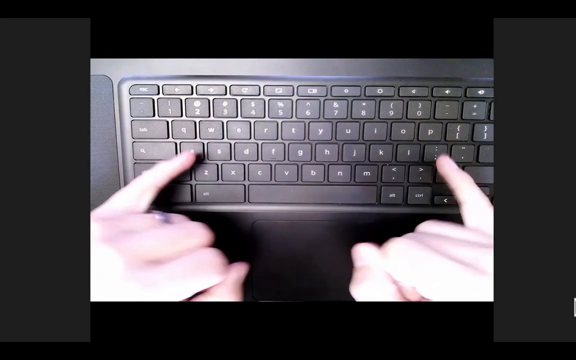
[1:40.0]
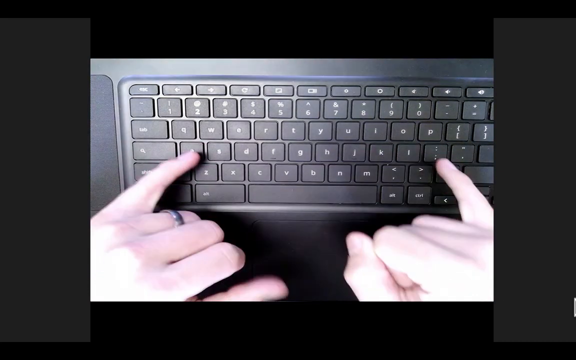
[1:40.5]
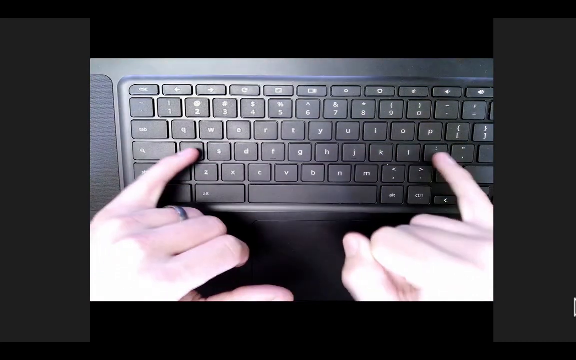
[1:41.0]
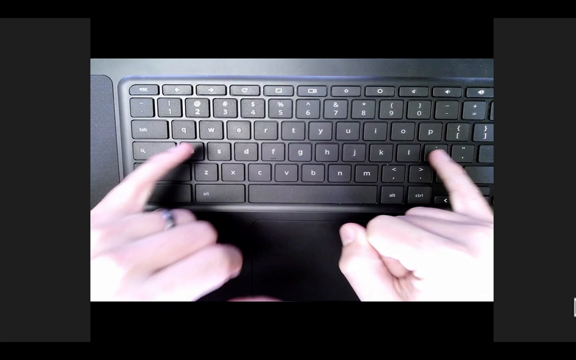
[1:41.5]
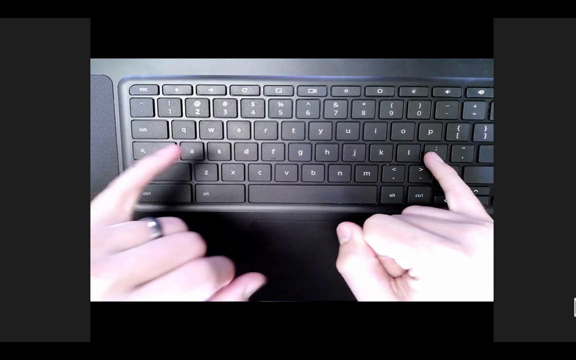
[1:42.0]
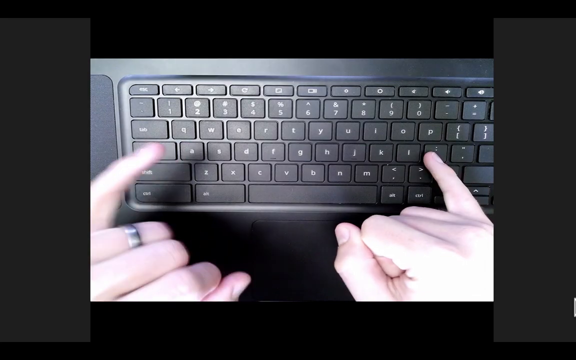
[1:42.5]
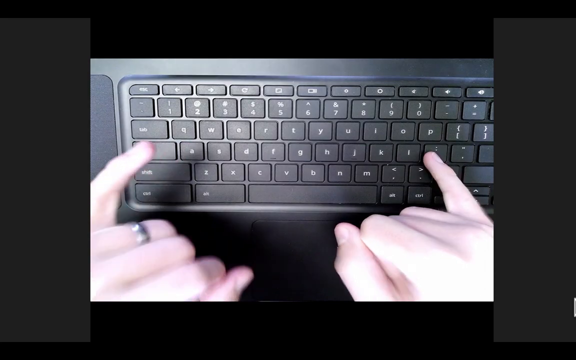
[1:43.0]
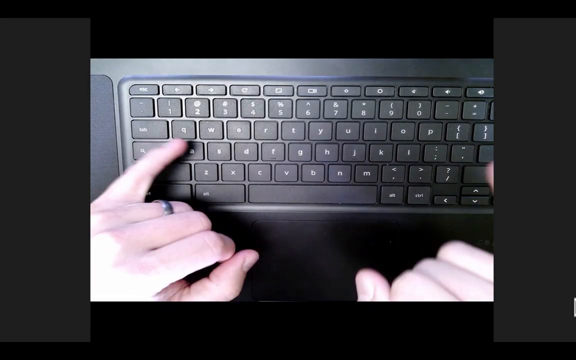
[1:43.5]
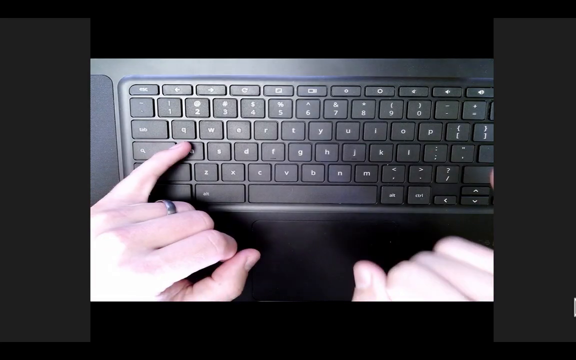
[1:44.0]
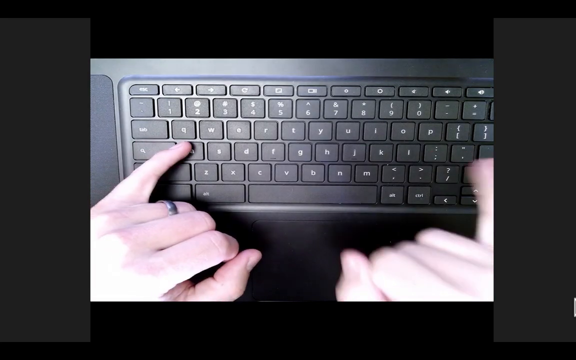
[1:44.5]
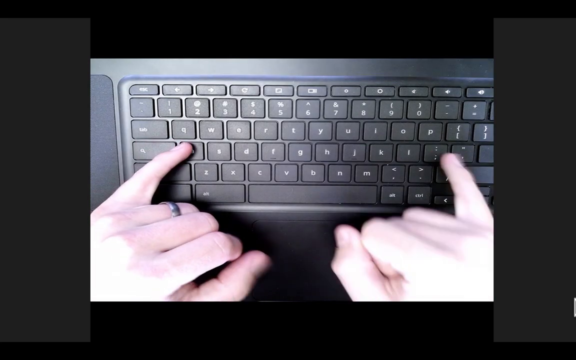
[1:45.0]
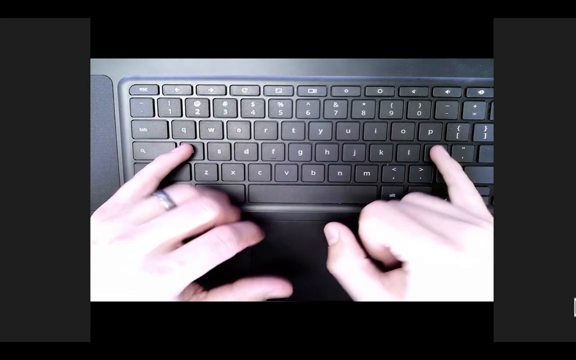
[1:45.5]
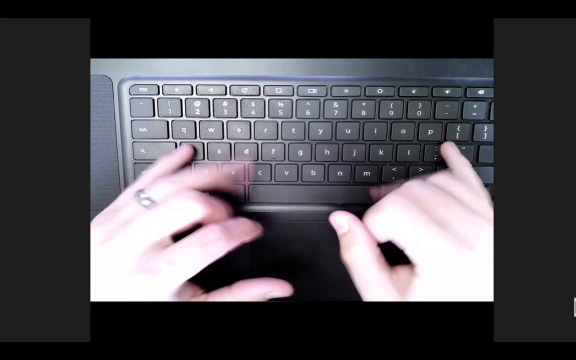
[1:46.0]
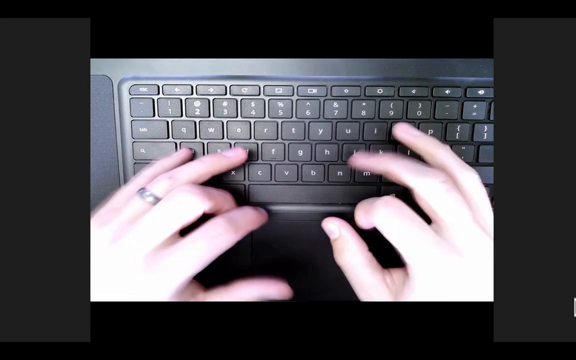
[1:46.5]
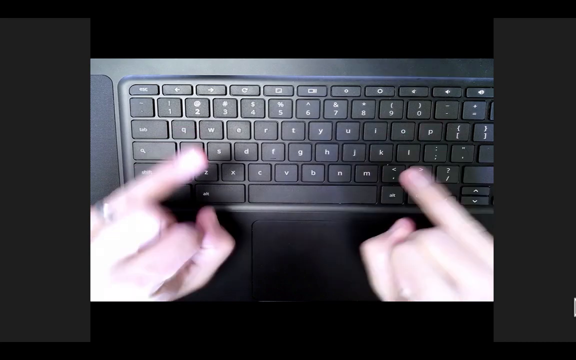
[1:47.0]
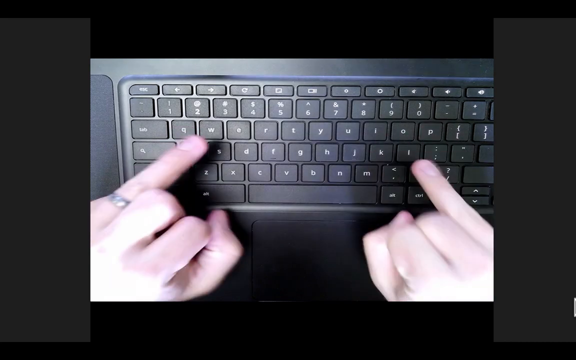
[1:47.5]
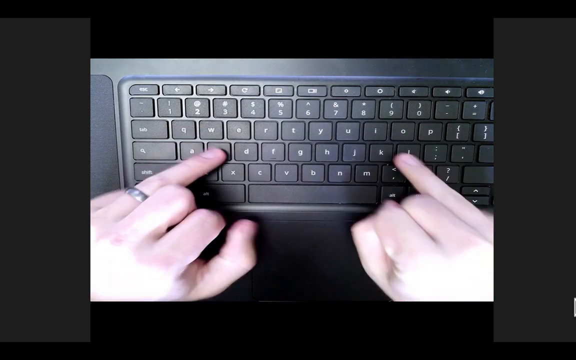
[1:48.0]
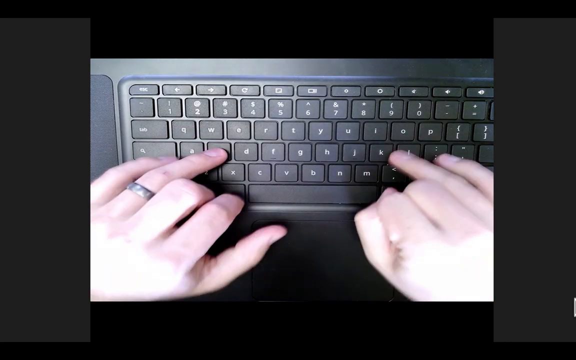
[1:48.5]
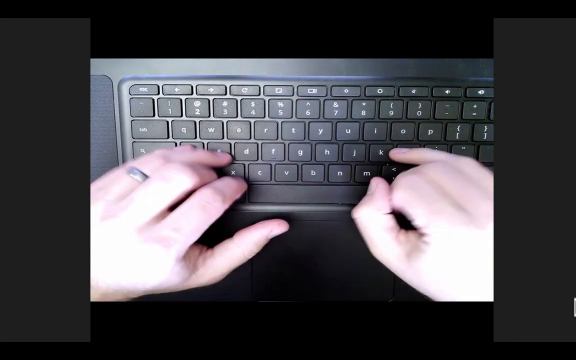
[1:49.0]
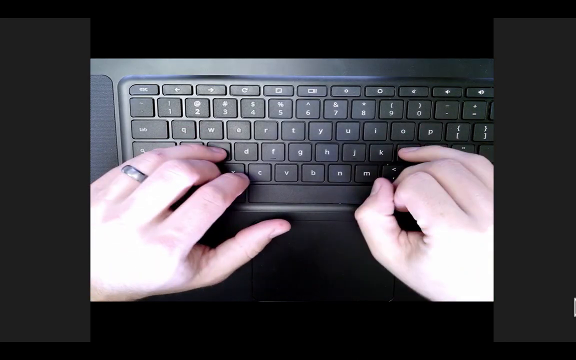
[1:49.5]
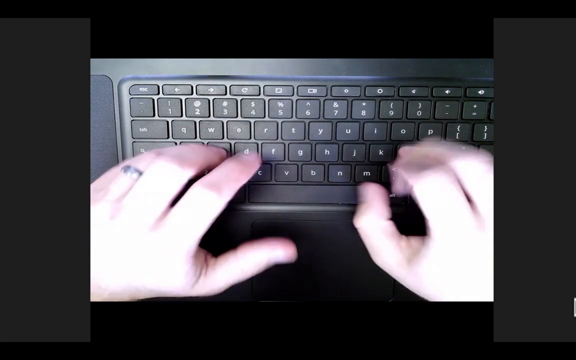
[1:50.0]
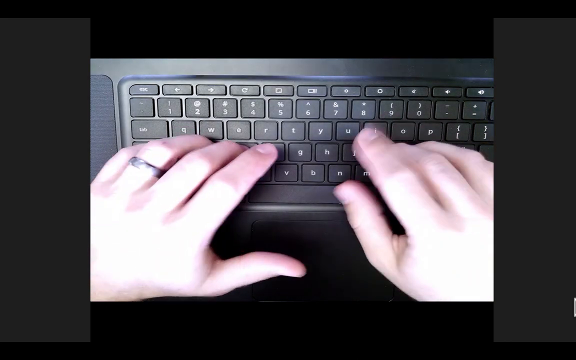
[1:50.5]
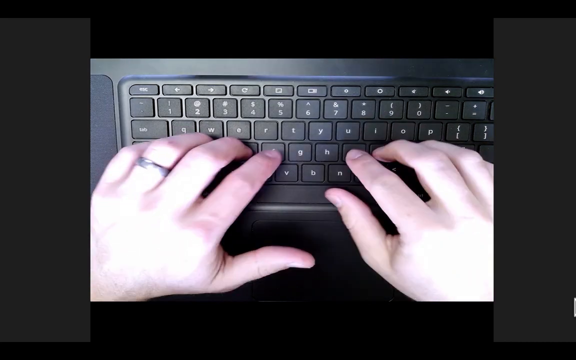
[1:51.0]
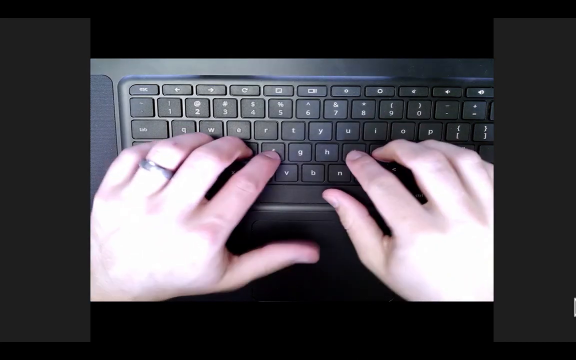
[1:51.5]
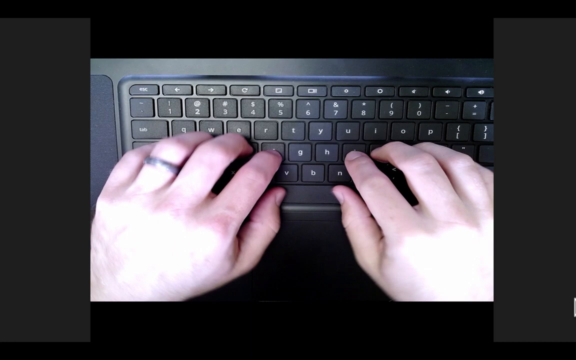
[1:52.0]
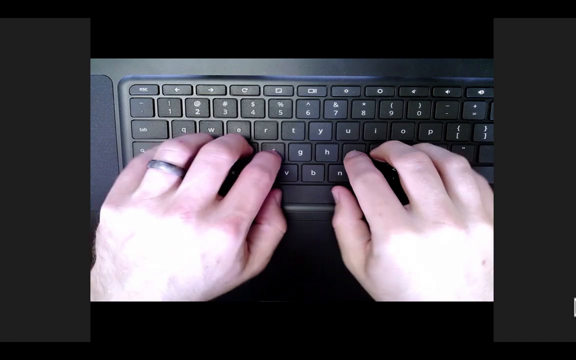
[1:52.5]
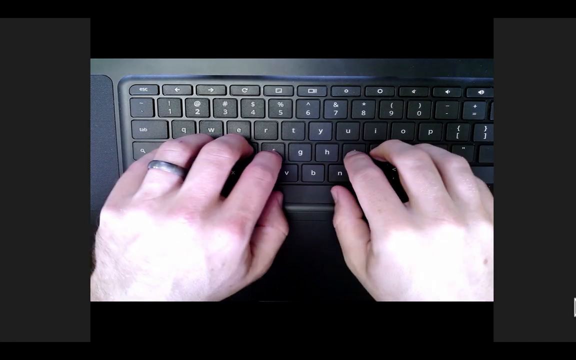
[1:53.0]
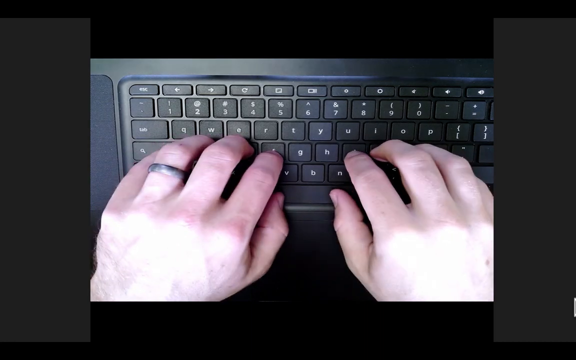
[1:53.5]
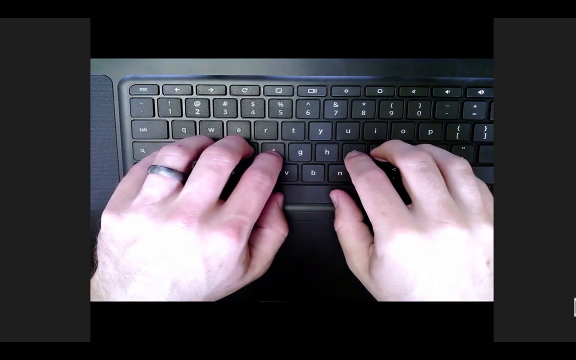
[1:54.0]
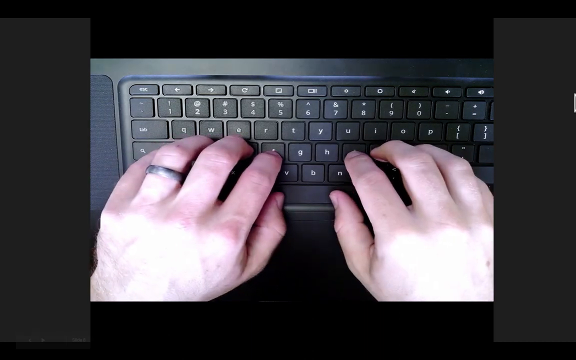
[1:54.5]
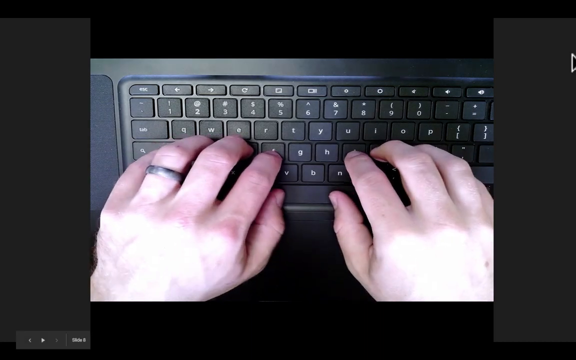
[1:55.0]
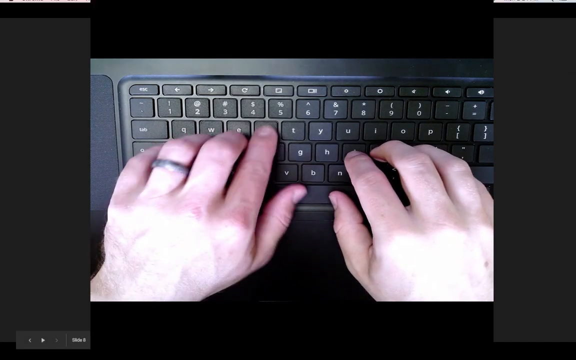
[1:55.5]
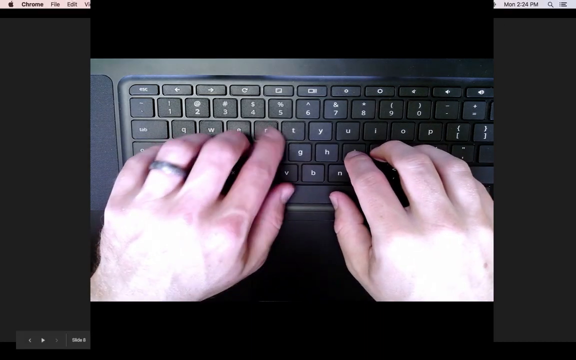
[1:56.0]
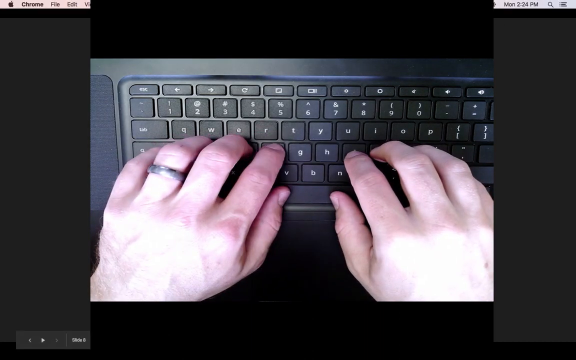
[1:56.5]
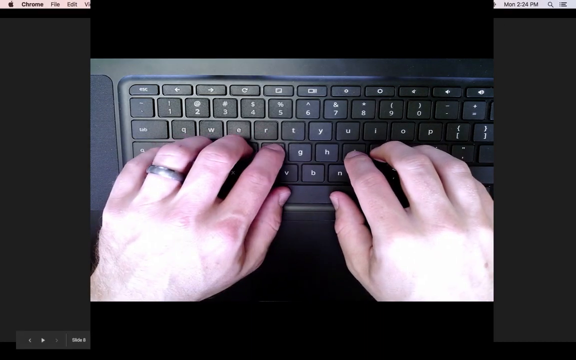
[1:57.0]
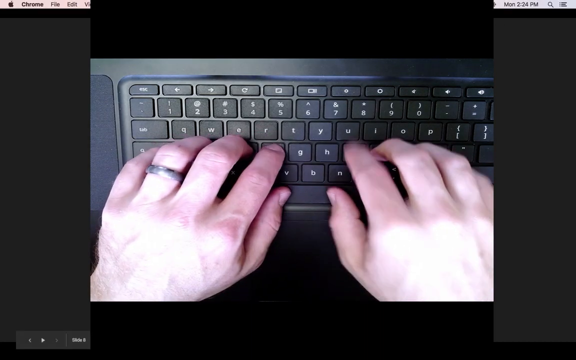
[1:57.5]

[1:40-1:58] The topic, home row keyboard basics, is shown, followed by a poster of a man carrying a hockey stick with a word associated with the topic. There is a drawing of a left and a right human hand with the fingers resting on specific keys: the left hand's fingers rest on A, S, D and F, and the right hand's fingers rest on J, K, L and one unnamed key. A visual keyboard has all its keys colored black except the special keys A, S, D, F and J, K, L, which are colored red and press on their own in a systematic order. A human hand holds a physical keyboard and appears to be clicking the special keys, A, S, D, F, J, K, L and one unnamed key, in a systematic manner.